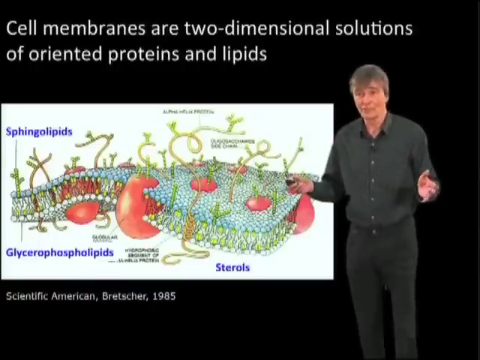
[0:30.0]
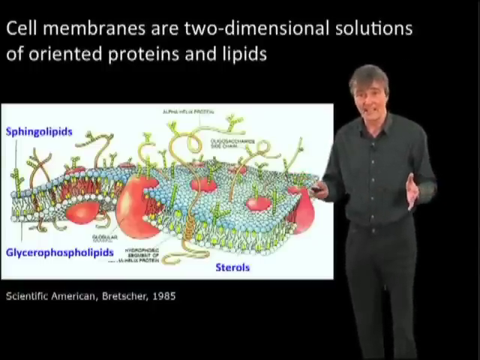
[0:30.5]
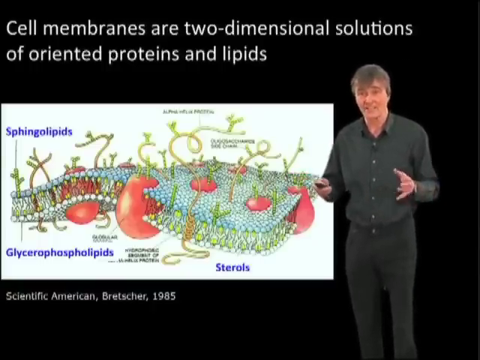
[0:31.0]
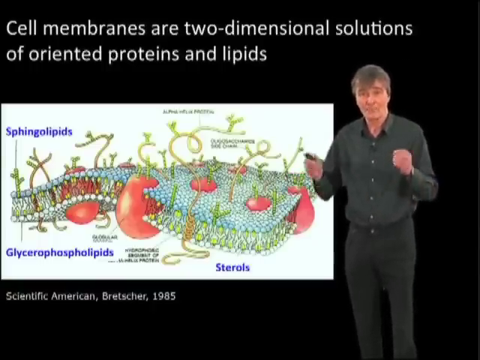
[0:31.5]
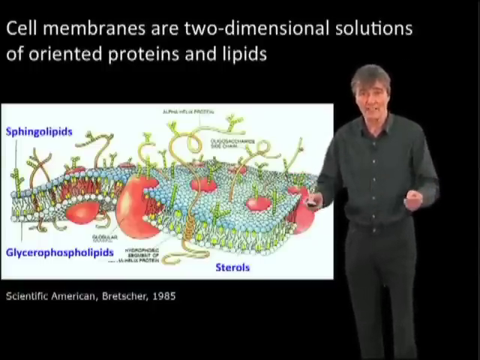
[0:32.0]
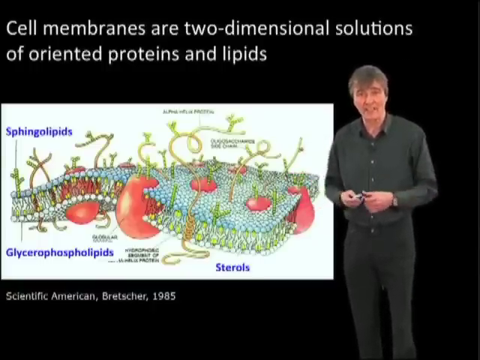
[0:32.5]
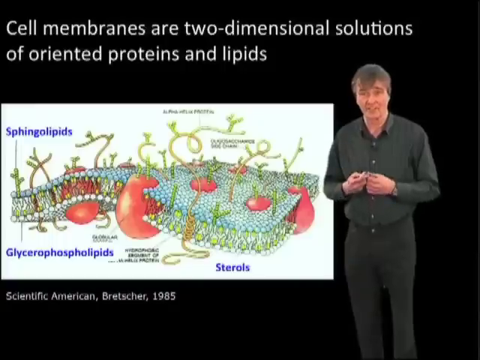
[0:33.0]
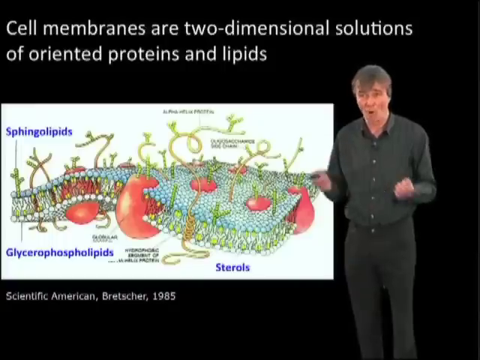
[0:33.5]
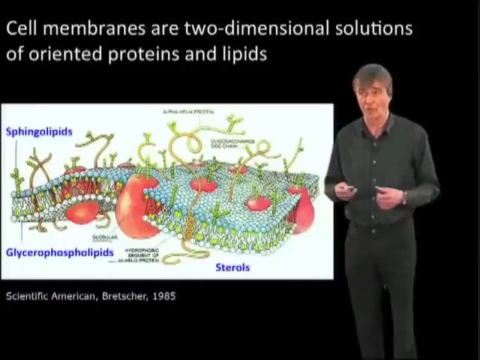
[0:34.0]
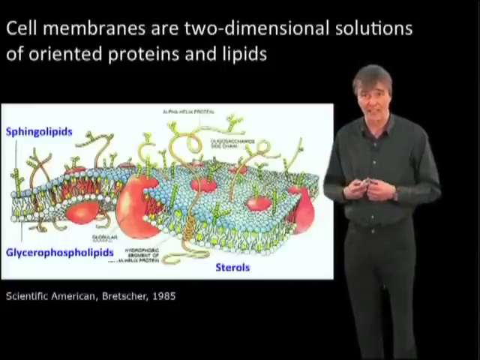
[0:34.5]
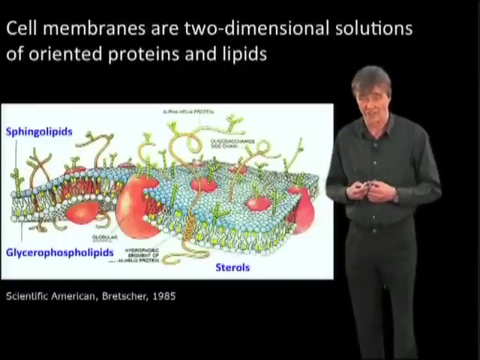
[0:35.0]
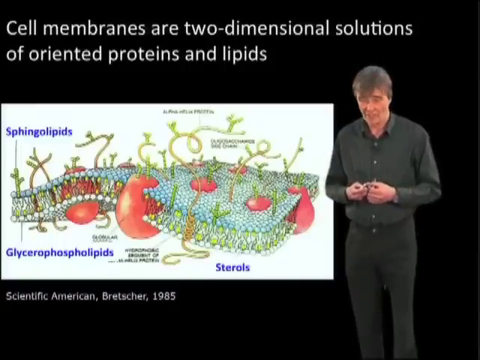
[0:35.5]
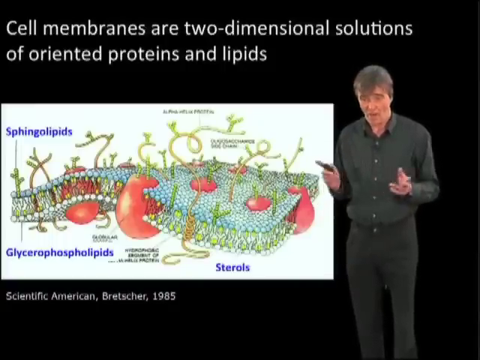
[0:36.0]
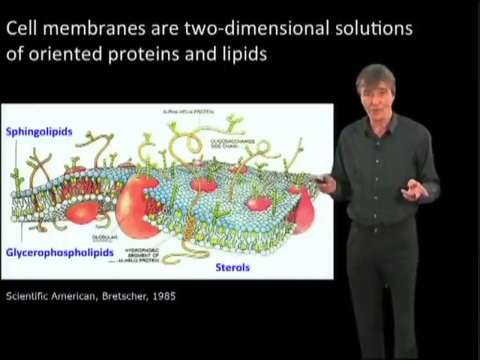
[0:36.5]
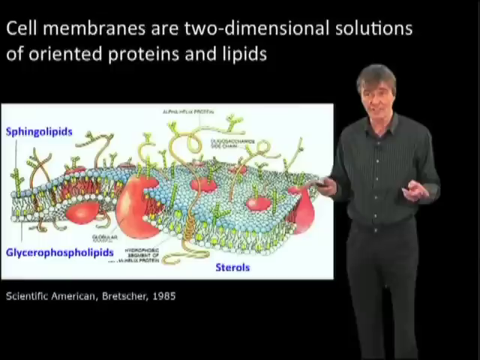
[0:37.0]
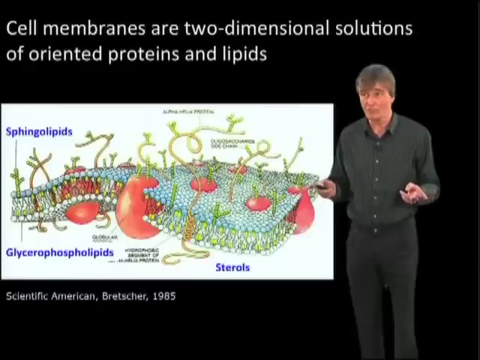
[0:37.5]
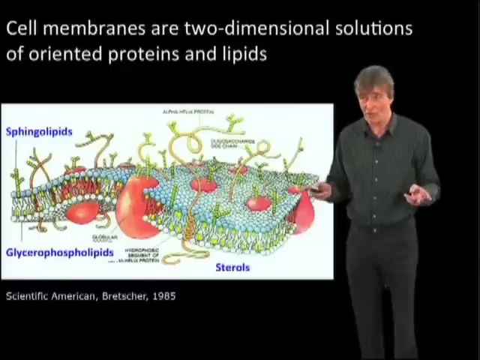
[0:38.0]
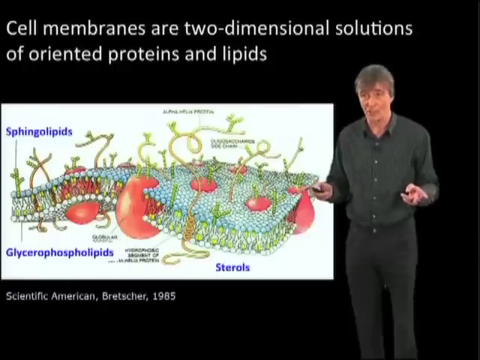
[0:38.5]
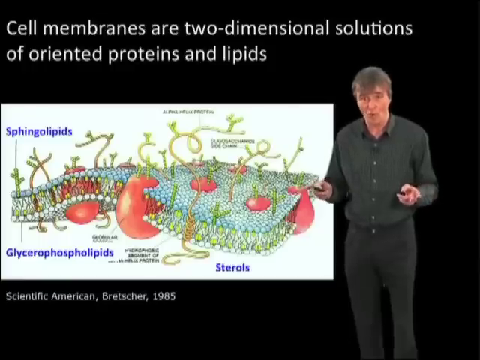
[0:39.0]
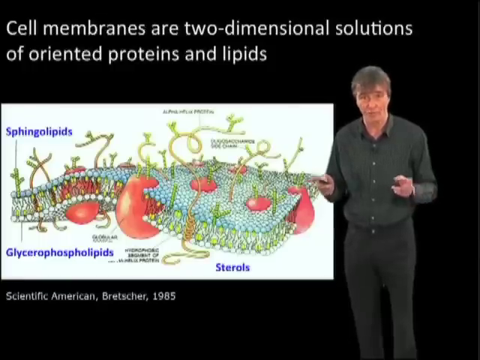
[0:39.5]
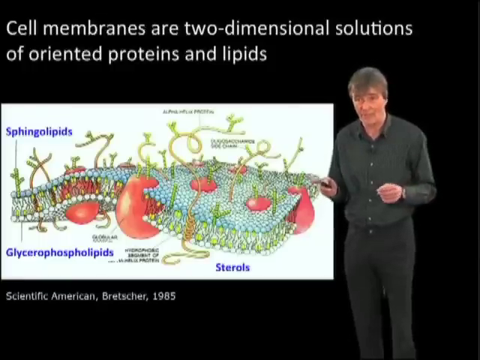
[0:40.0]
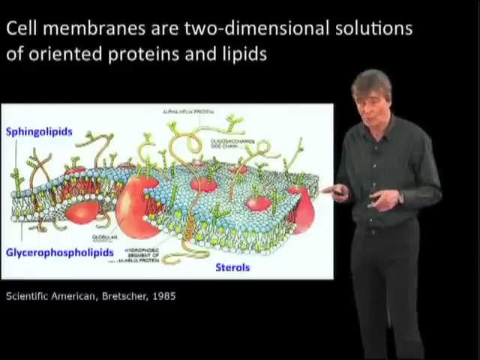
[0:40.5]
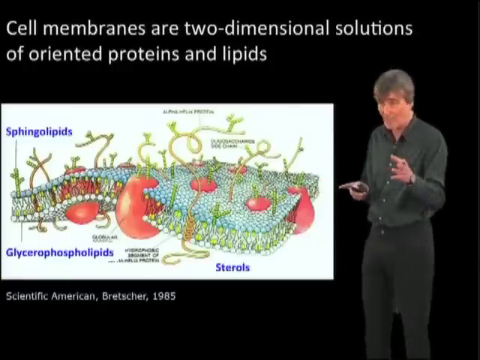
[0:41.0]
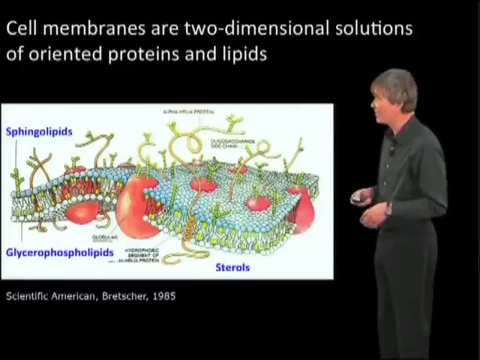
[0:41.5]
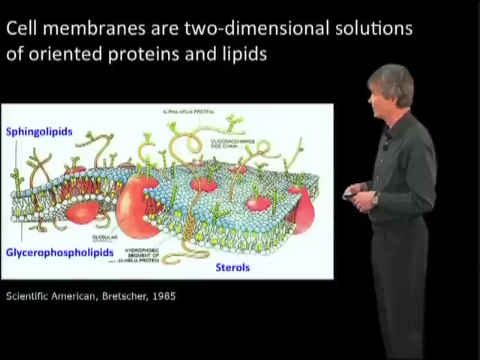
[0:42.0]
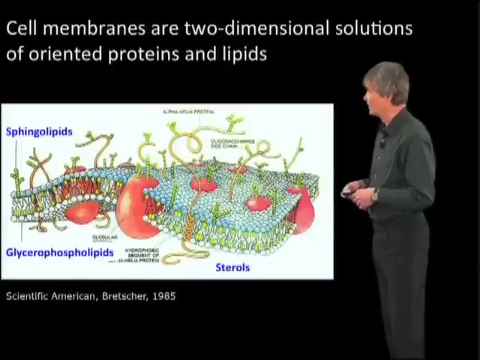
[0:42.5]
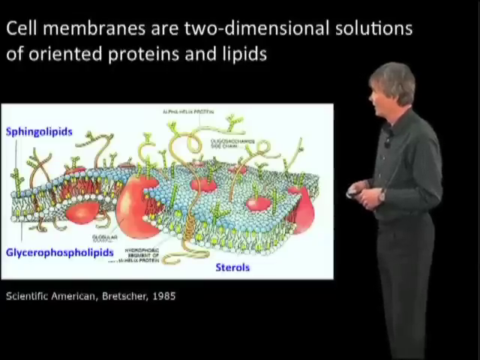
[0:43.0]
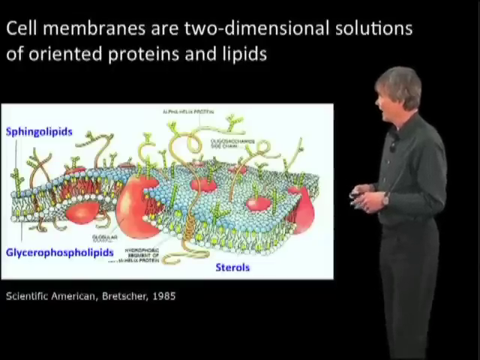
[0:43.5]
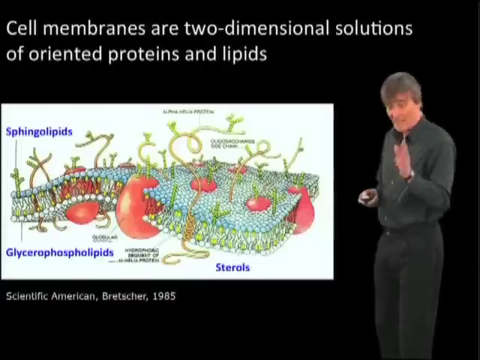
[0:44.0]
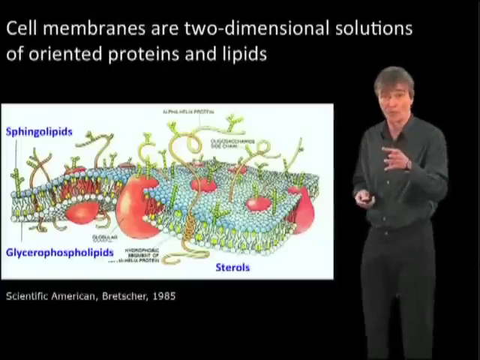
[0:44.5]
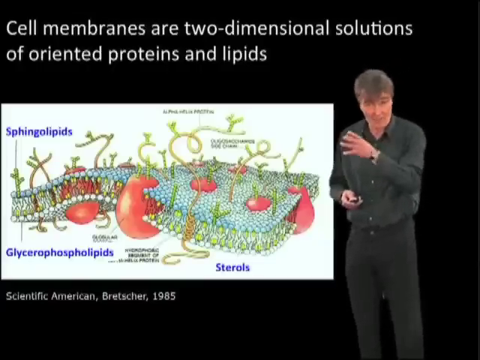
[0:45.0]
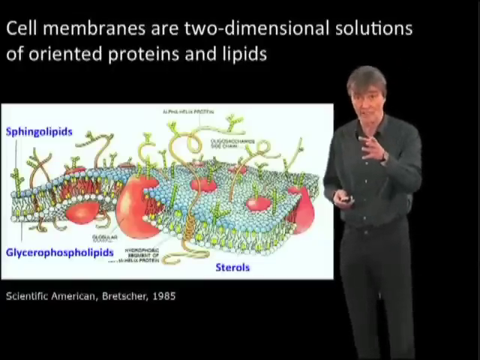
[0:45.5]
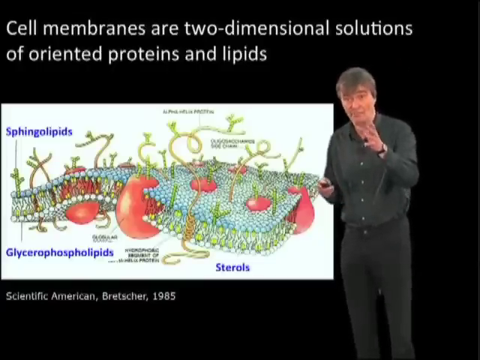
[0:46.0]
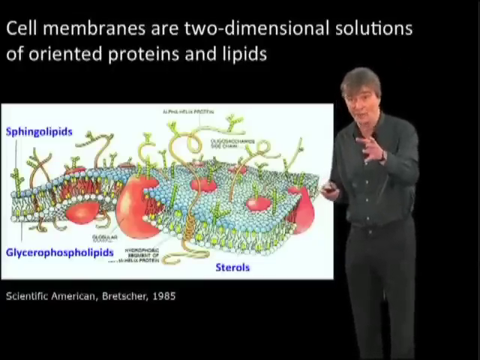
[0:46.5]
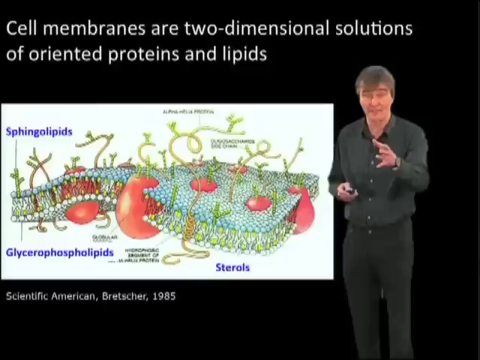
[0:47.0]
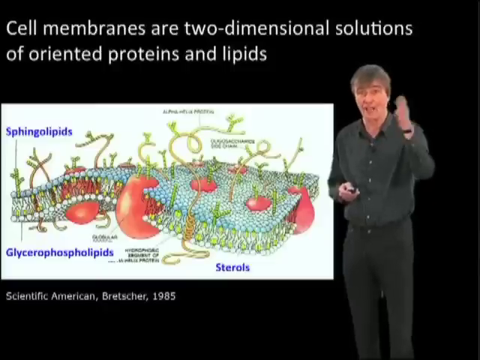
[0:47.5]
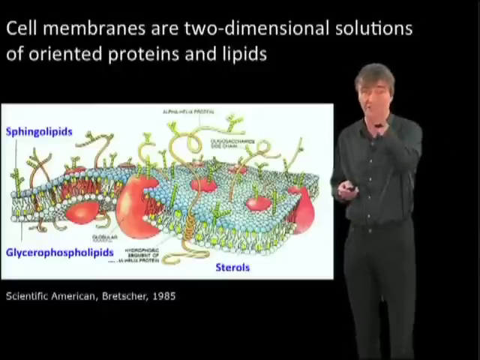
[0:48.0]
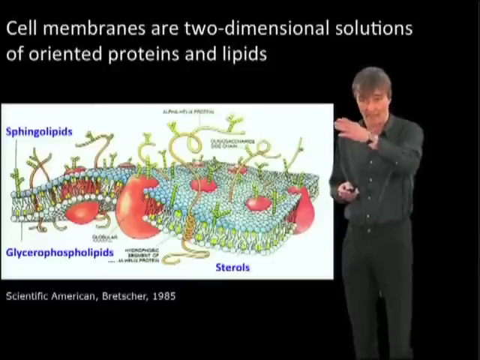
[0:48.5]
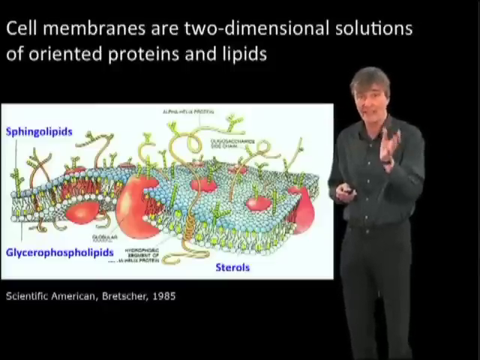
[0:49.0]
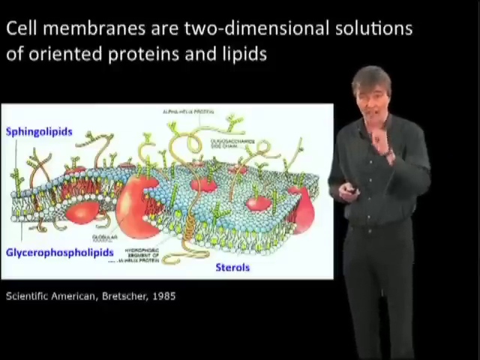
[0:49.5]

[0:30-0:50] The same cell membrane slide stays up. The detailed diagram shows the phospholipid heads and tails that make up the cell membrane, some protein structures embedded in the membrane, and other labels that are quite blurry. The main labels are in blue: sphingolipids, illustrated by yellow branches sticking out of the cell membrane, and glycerophospholipids, pointing to the heads of the phospholipid bilayer. The instructor is more animated now, moving his arms around in mostly open motions, which looks inviting and engaged rather than closed off, and he makes direct eye contact with the camera. He turns back to the slide and then looks at the camera again. He talks with his hands, especially his left hand, waving it from side to side for emphasis.